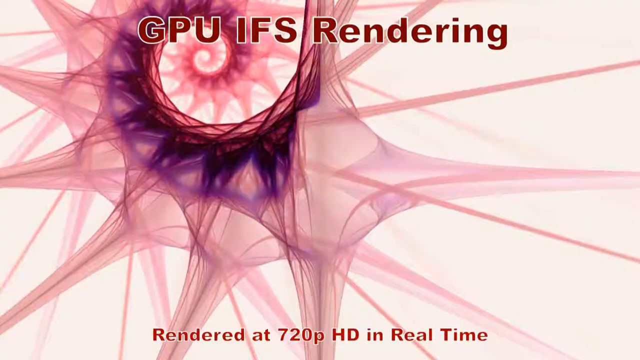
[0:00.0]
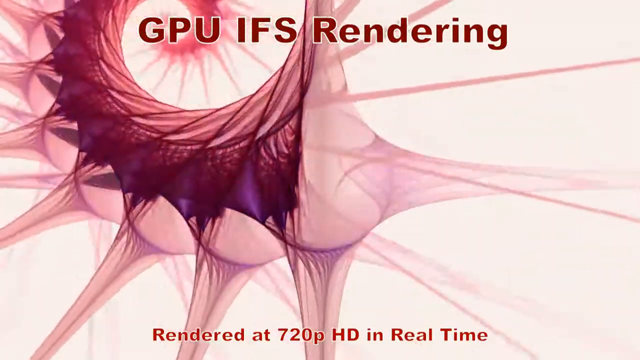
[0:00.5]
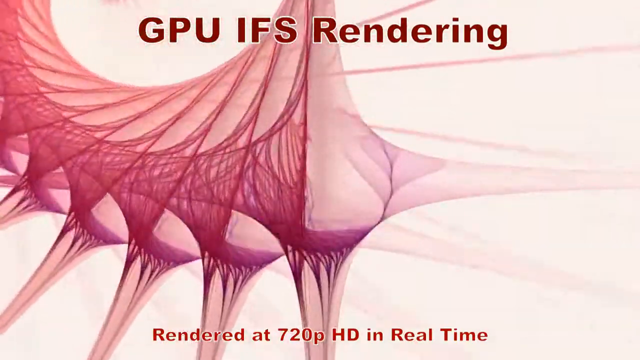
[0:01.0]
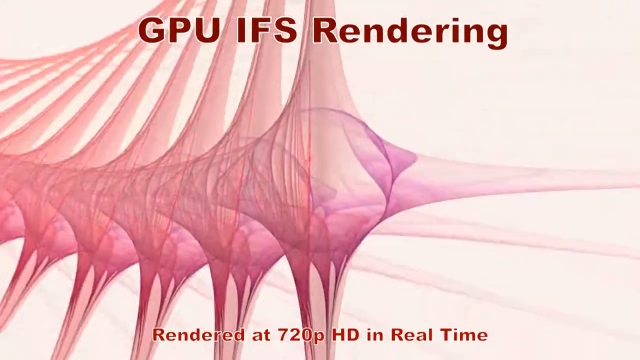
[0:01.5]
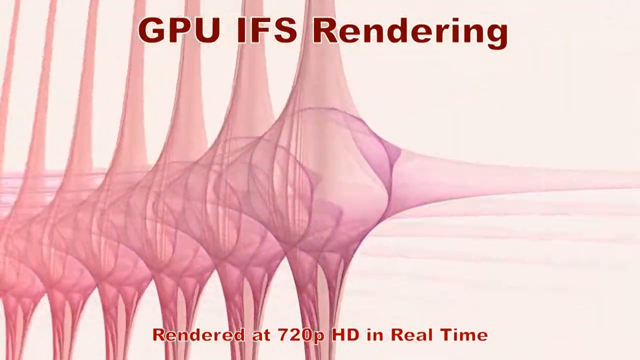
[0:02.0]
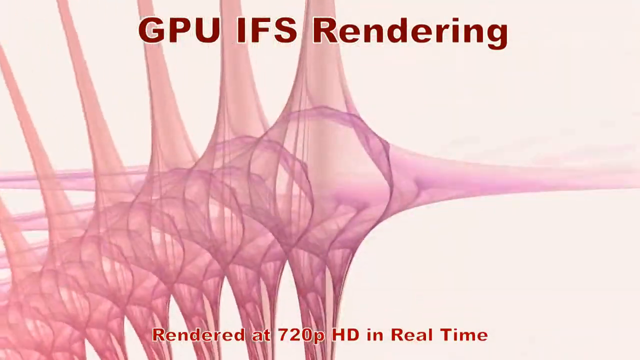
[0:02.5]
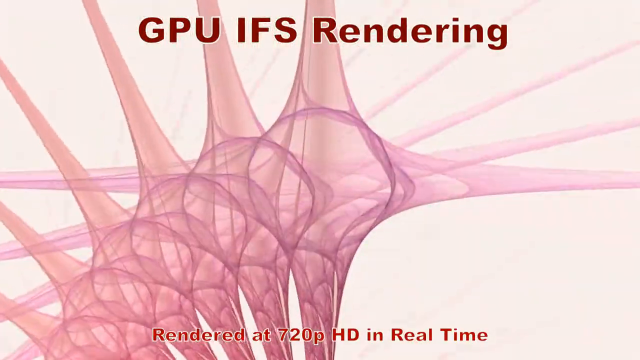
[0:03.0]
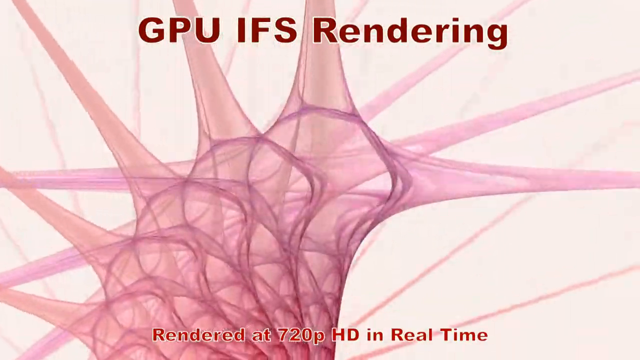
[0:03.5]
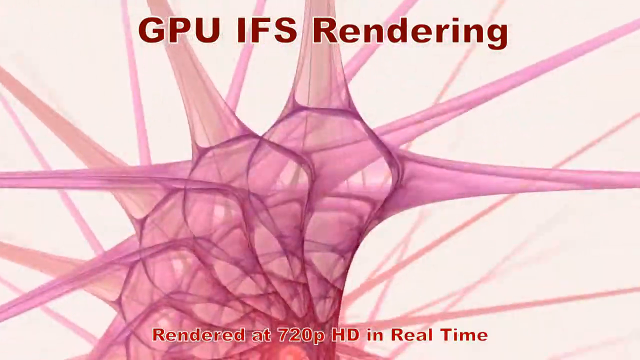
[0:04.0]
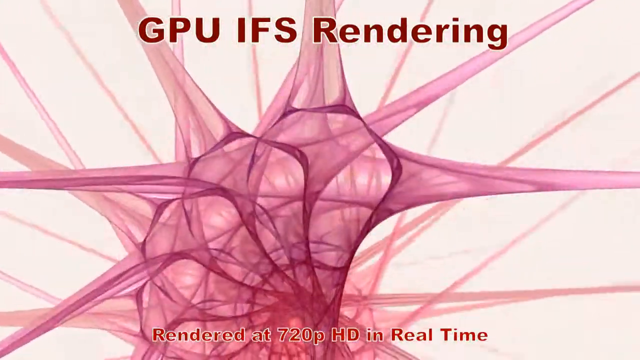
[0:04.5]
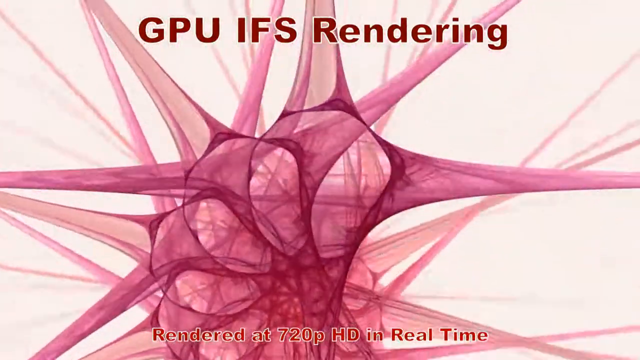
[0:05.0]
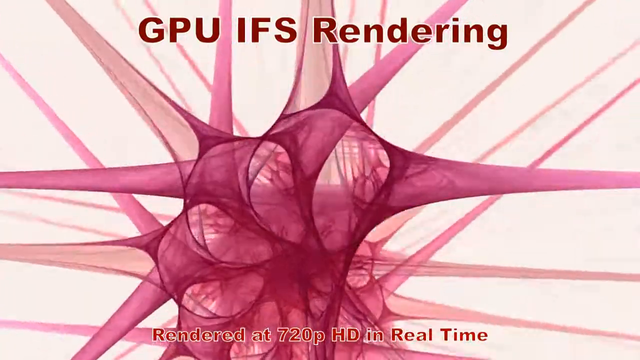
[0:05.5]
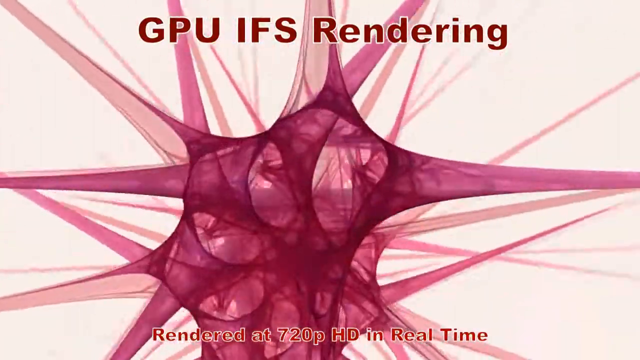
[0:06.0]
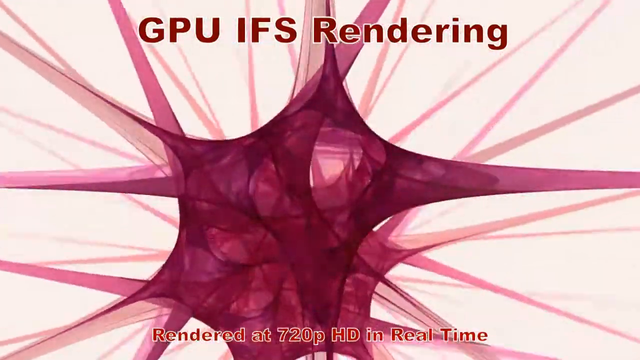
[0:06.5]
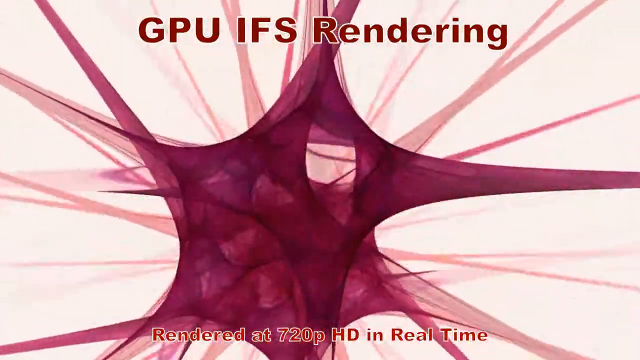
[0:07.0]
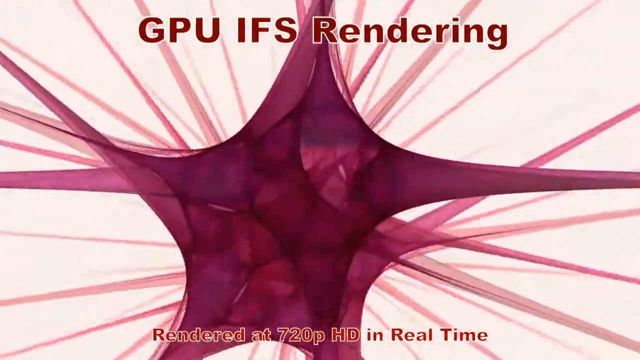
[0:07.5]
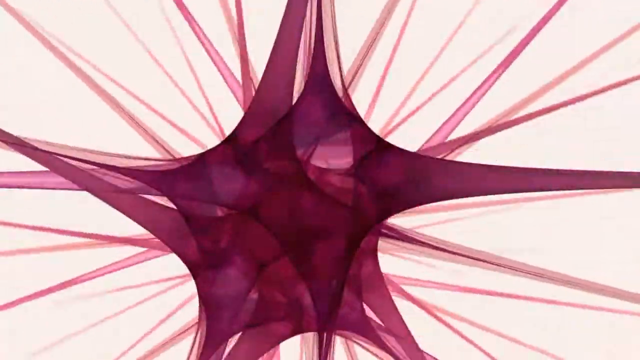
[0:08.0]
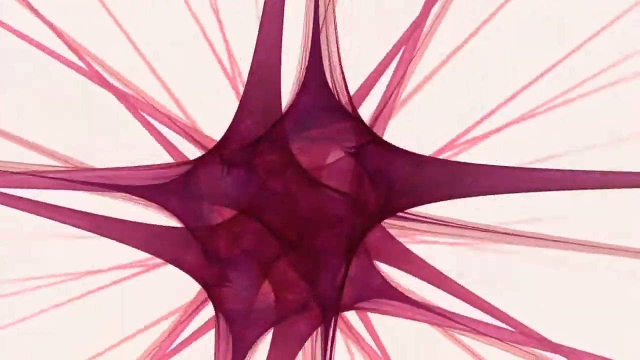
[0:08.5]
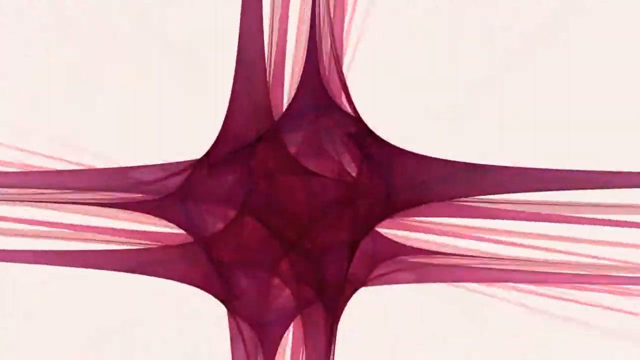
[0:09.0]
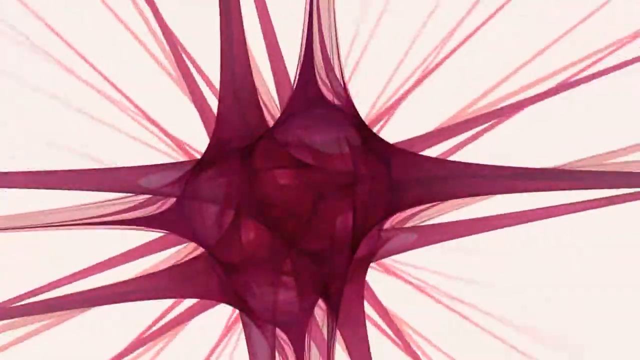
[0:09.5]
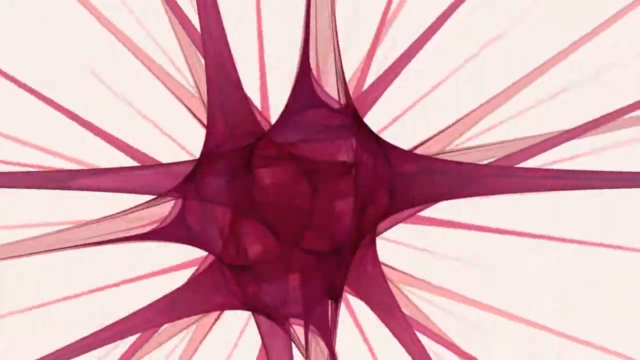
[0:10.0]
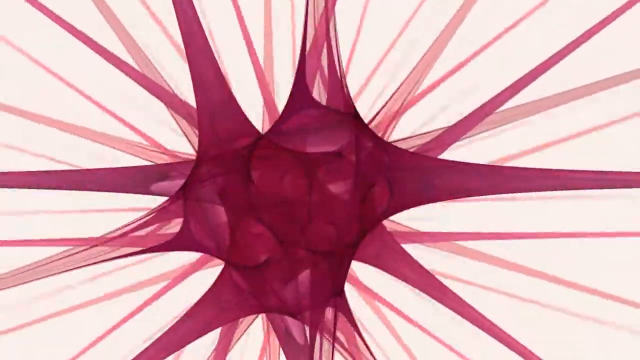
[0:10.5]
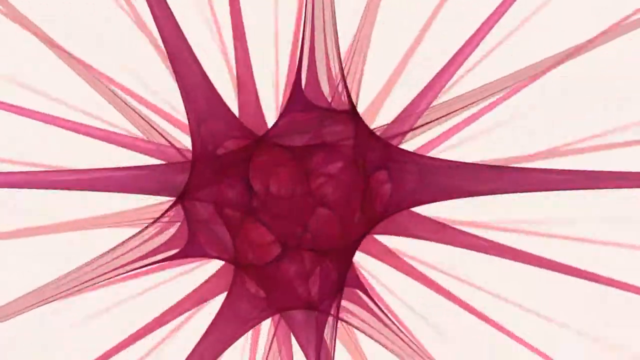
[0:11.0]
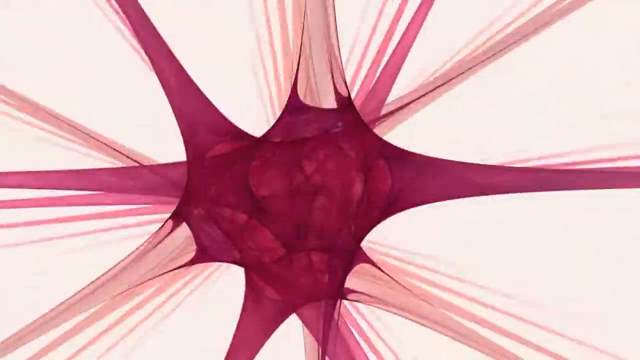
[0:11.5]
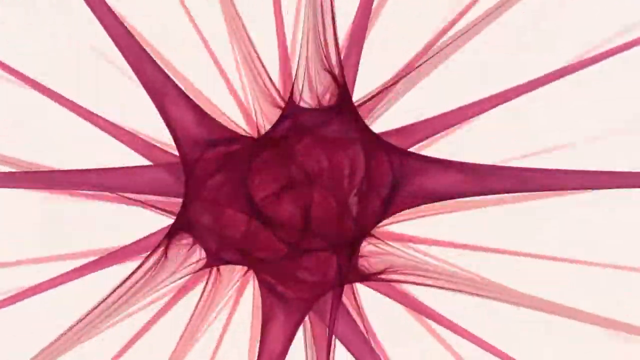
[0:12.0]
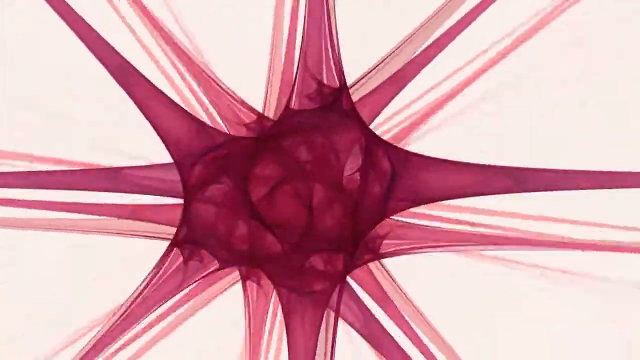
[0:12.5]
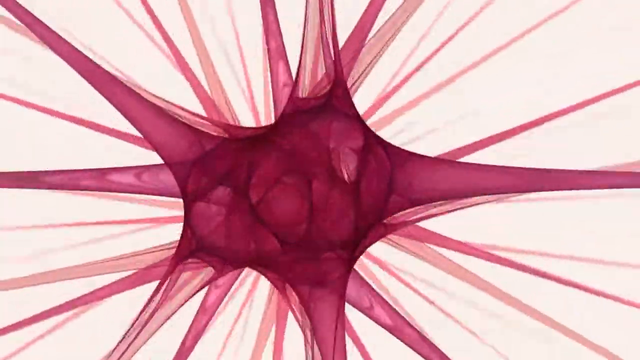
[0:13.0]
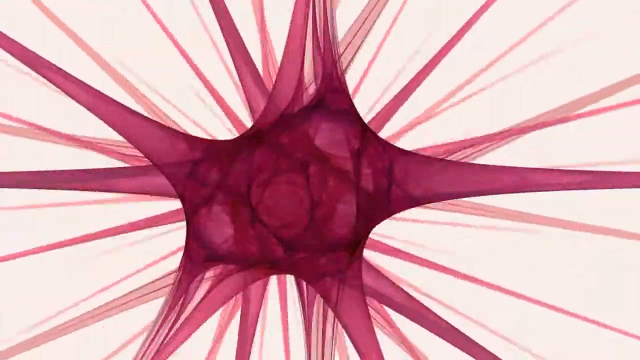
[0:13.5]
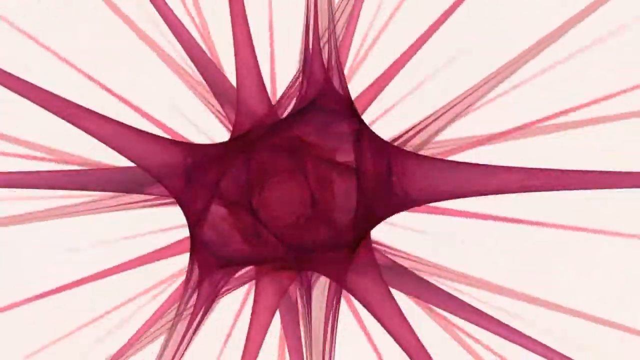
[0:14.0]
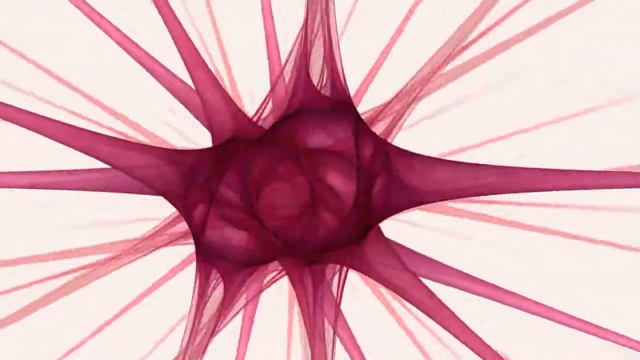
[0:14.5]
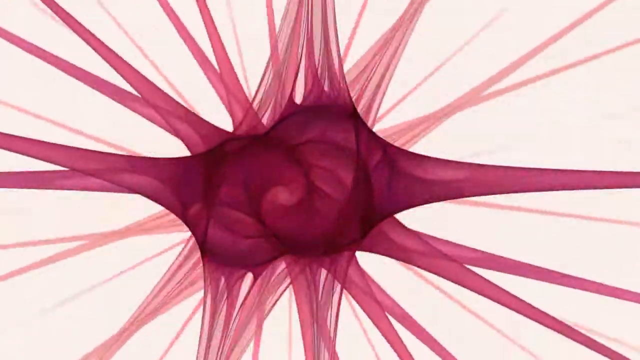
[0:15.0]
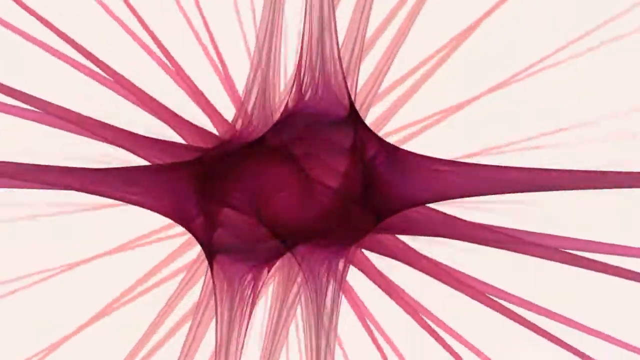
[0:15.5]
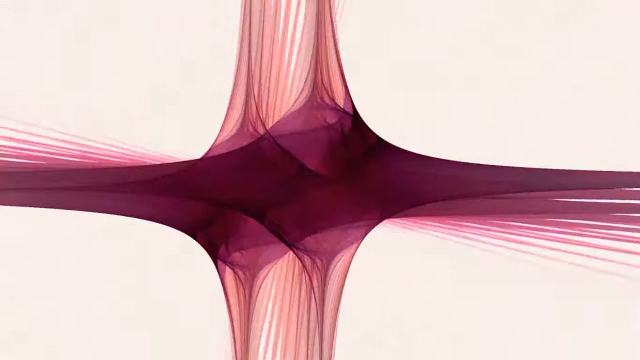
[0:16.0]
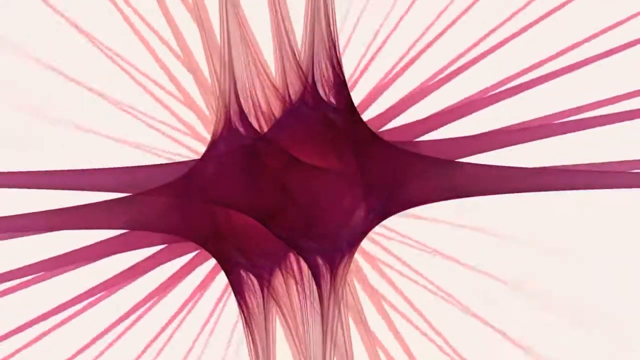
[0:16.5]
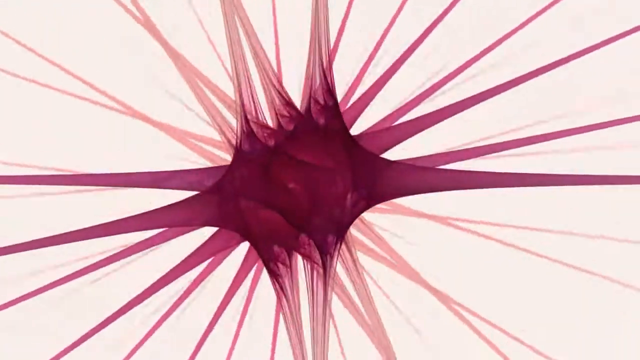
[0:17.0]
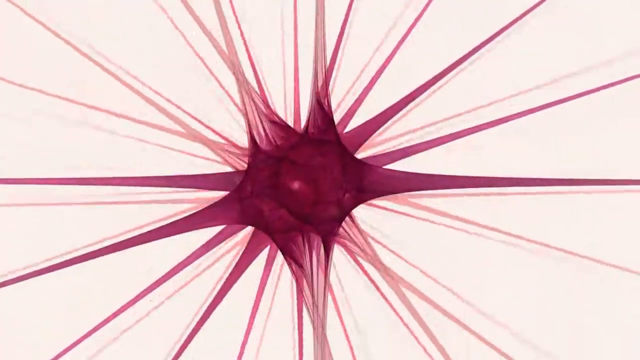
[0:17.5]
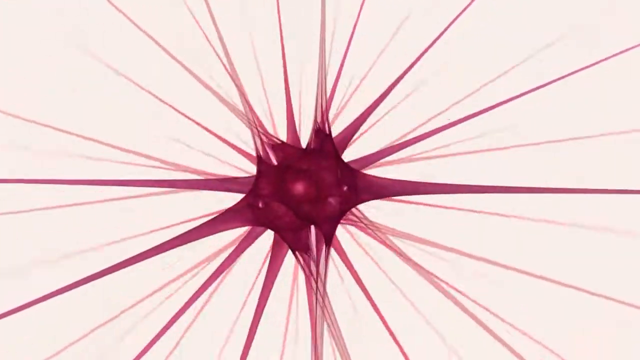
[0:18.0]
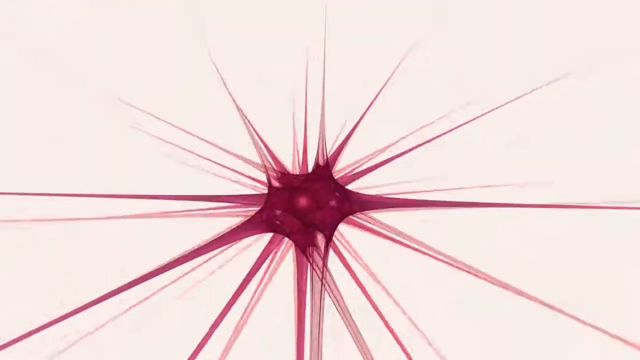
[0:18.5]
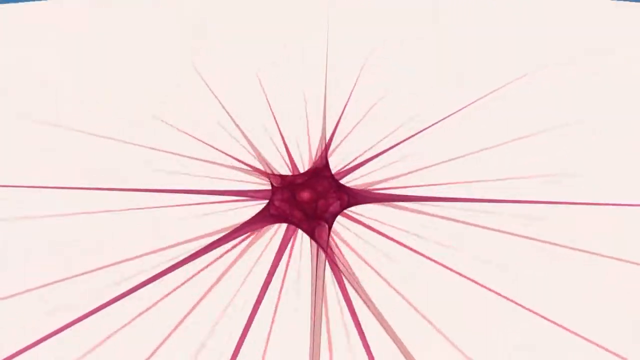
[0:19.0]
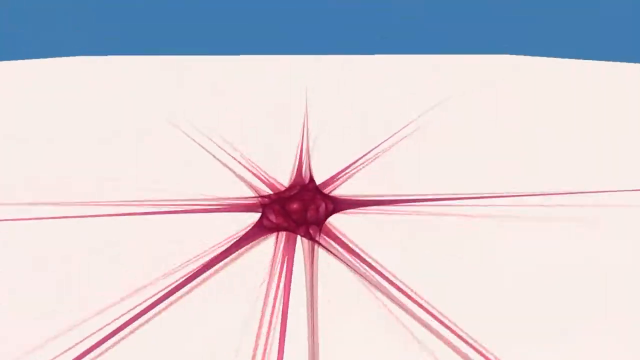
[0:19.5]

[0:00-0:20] A kaleidoscope-style view shows a maroon image repeating itself, spinning and duplicating and triplicating until it takes over the whole screen. At the very beginning it almost looks like a shell image, but it is a four-point star-looking item. The colour sometimes shifts to more of a mauve than a maroon or purple. The image swirls from left to right into circles, with multiples on screen at one time; sometimes there are so many that they are all that can be seen. The view keeps going and then zooms out, showing the image in bigger detail. Toward the end the video has a white background with a blue top, with the image still filling three-quarters of the page toward the bottom.